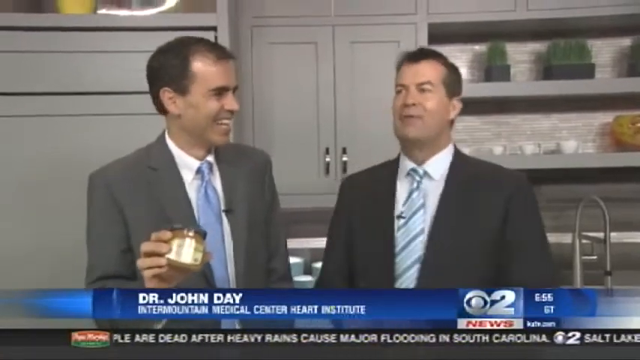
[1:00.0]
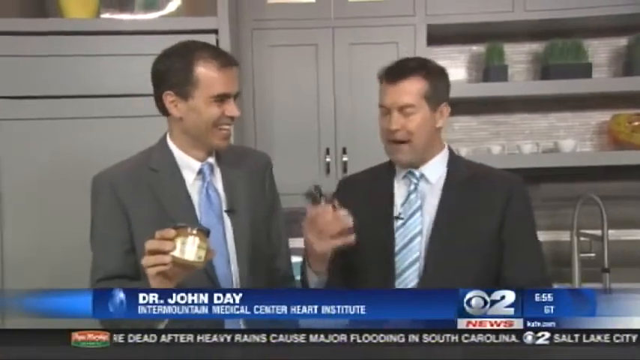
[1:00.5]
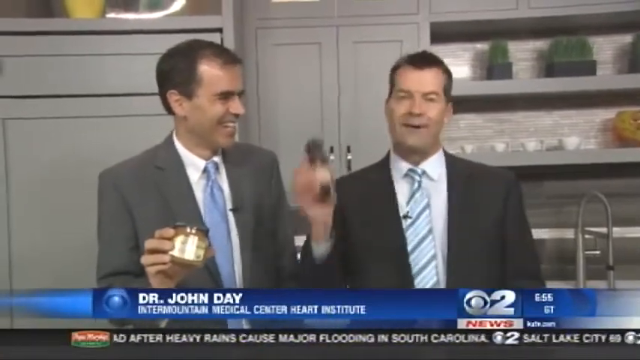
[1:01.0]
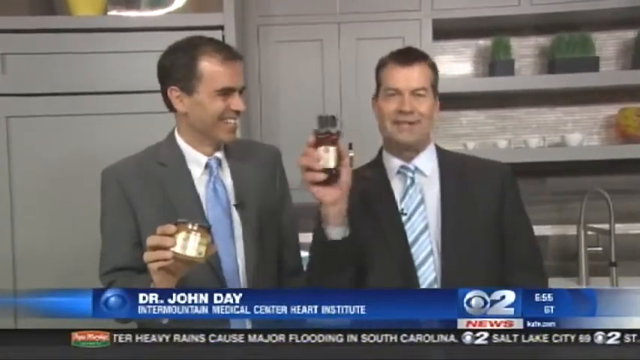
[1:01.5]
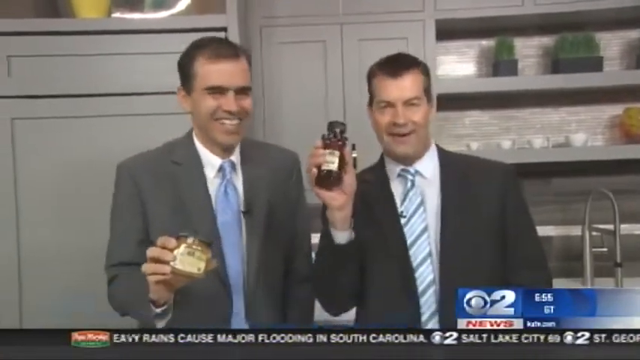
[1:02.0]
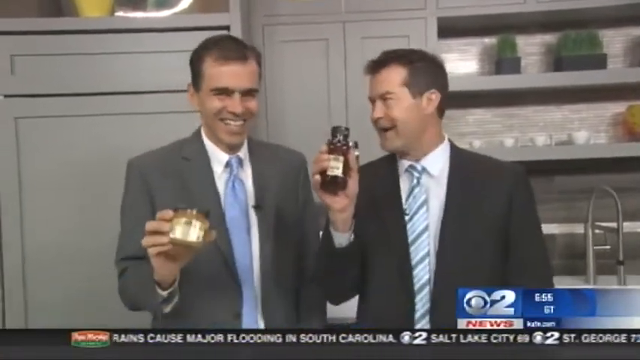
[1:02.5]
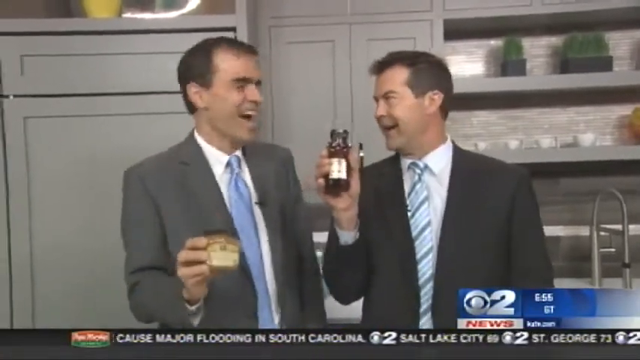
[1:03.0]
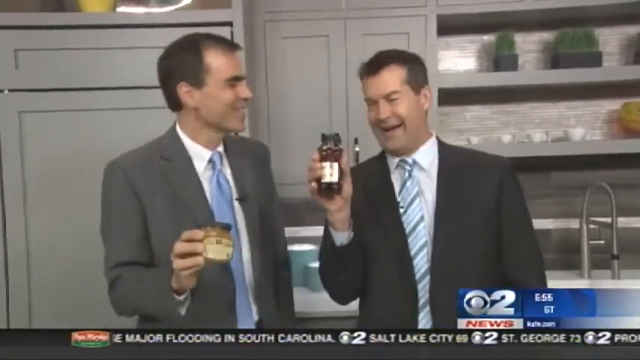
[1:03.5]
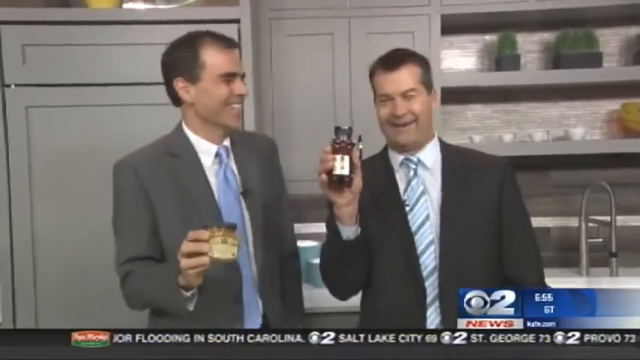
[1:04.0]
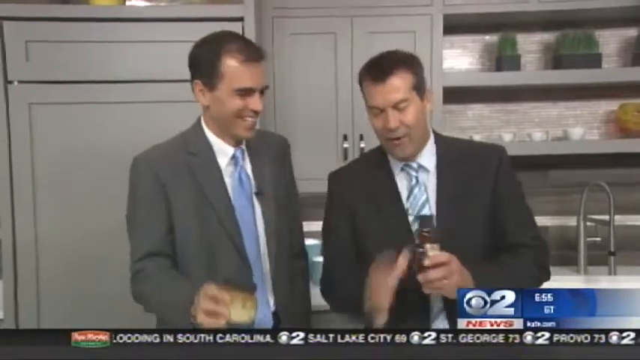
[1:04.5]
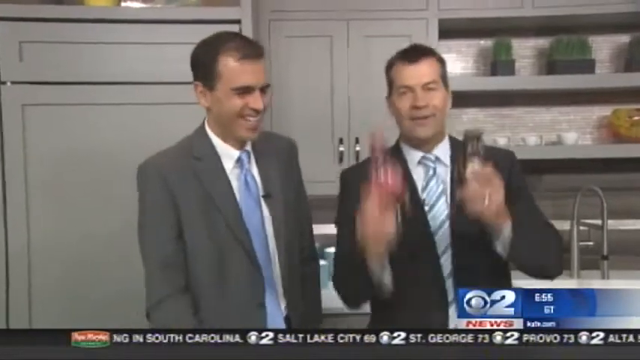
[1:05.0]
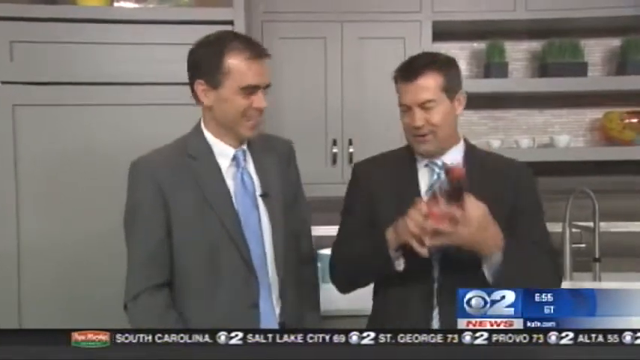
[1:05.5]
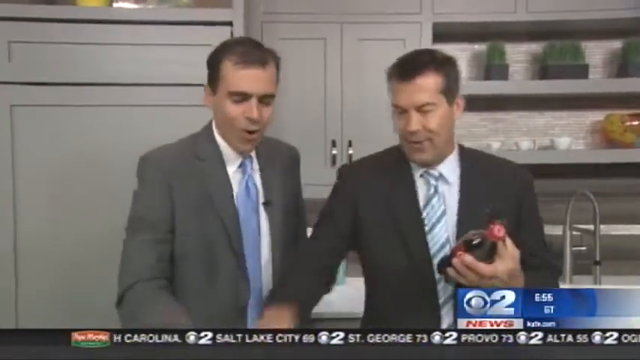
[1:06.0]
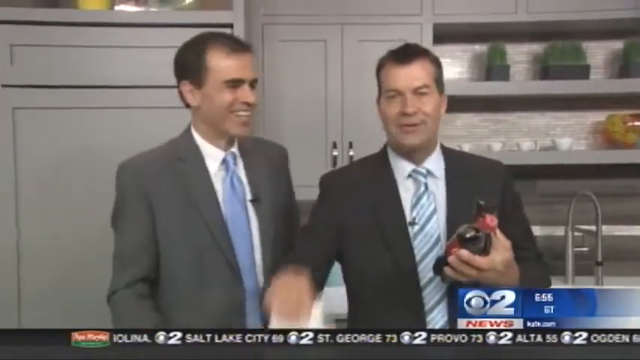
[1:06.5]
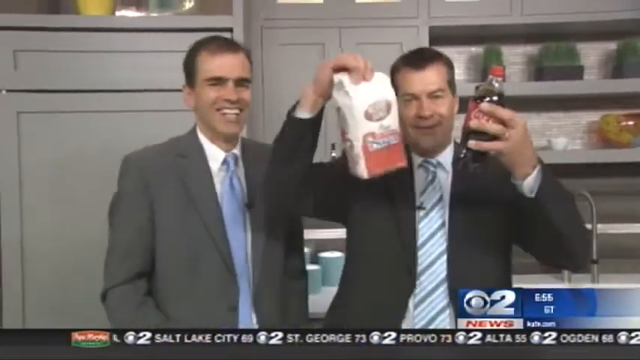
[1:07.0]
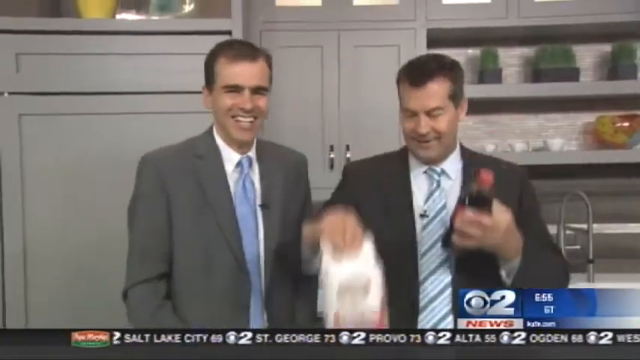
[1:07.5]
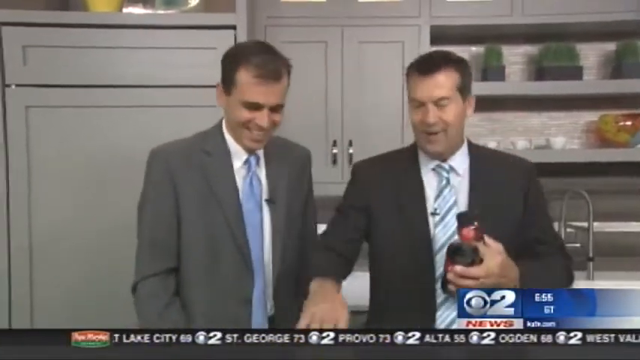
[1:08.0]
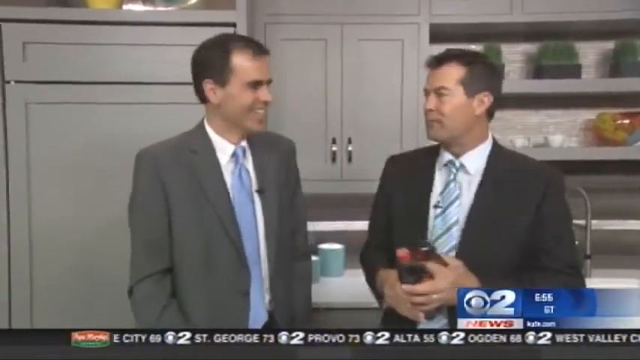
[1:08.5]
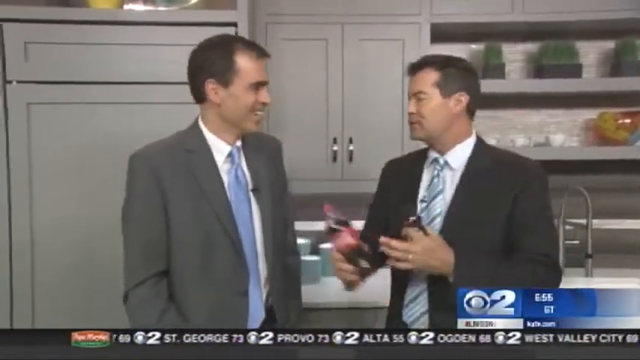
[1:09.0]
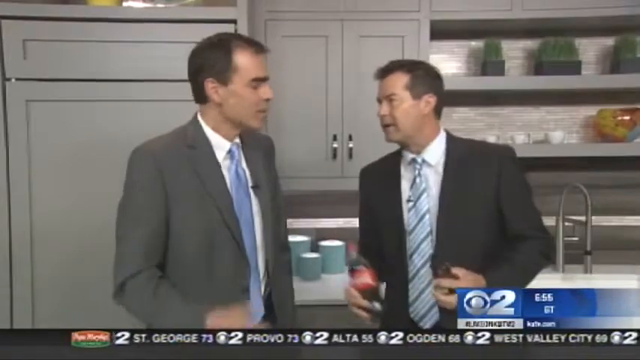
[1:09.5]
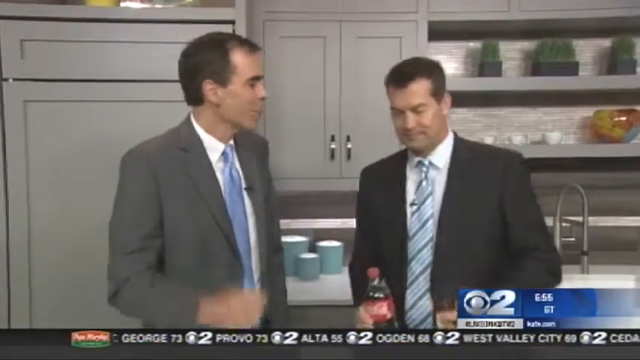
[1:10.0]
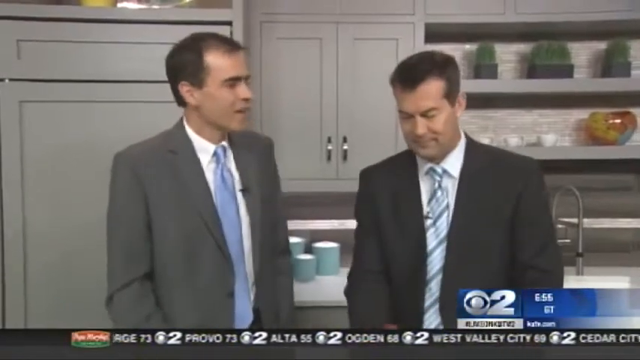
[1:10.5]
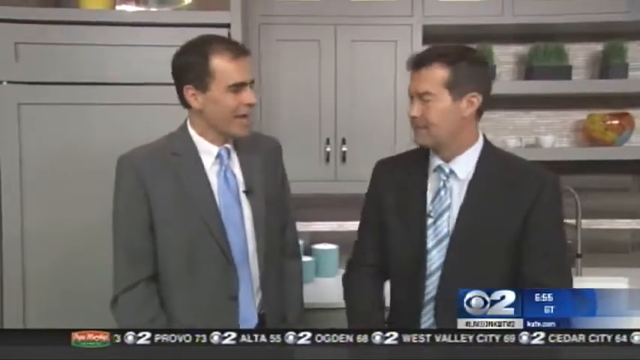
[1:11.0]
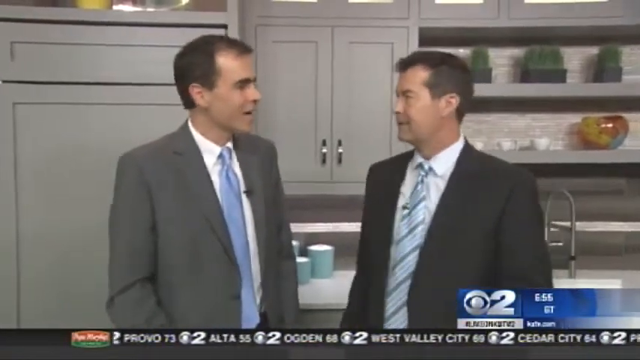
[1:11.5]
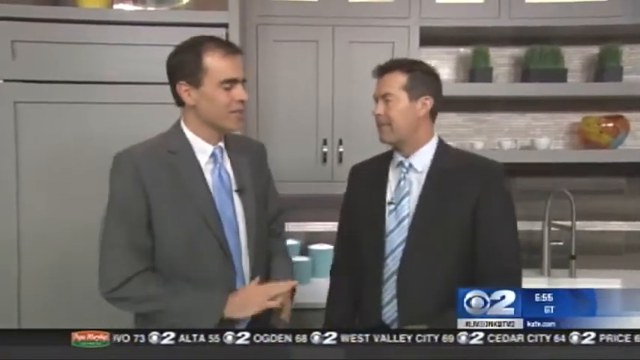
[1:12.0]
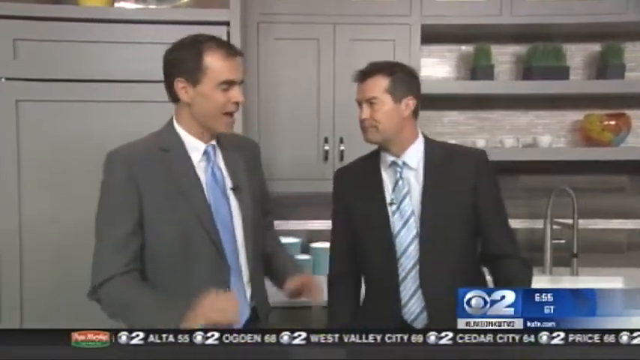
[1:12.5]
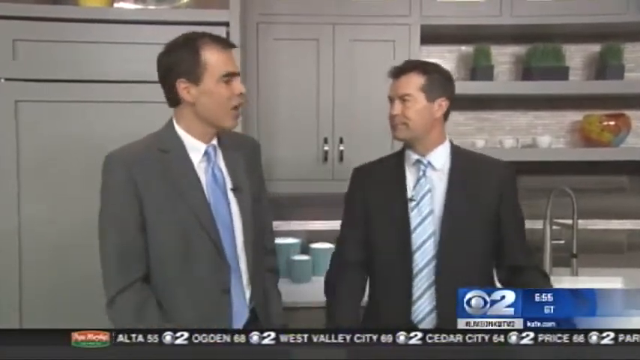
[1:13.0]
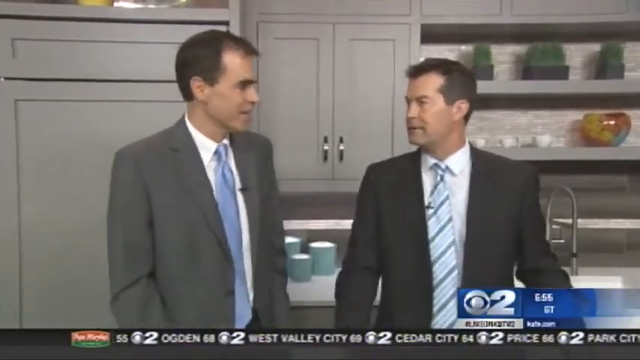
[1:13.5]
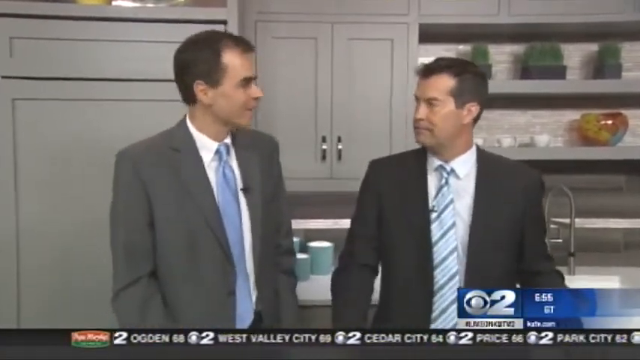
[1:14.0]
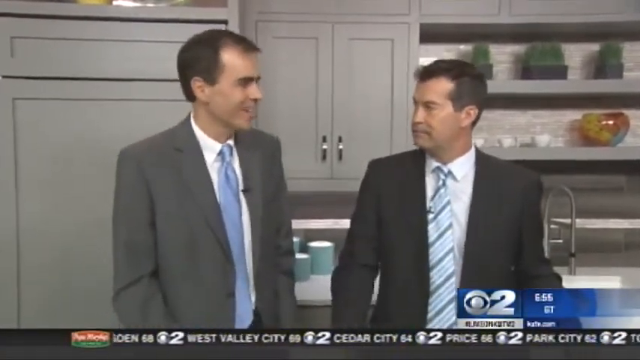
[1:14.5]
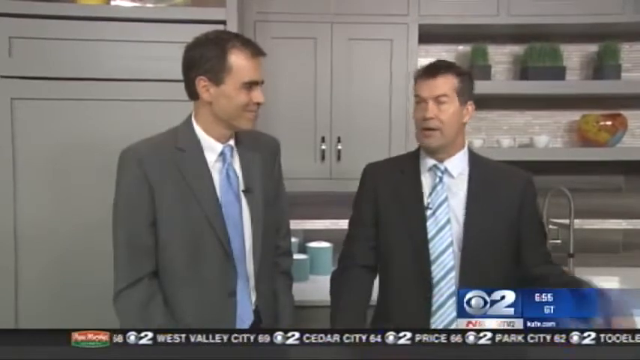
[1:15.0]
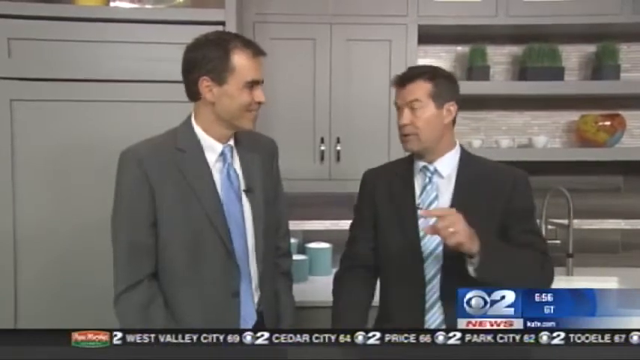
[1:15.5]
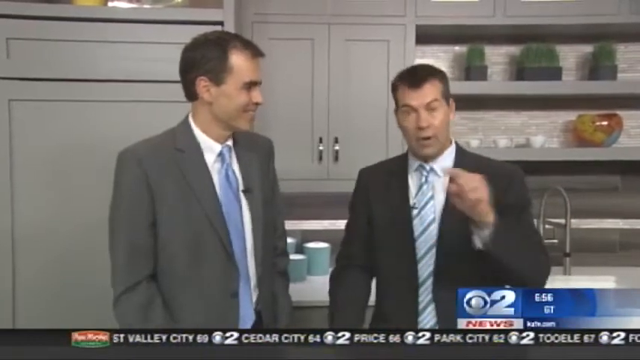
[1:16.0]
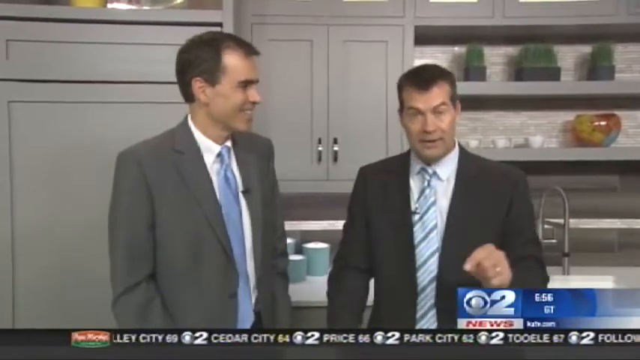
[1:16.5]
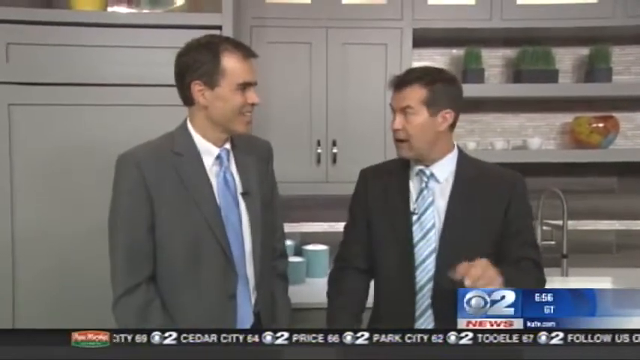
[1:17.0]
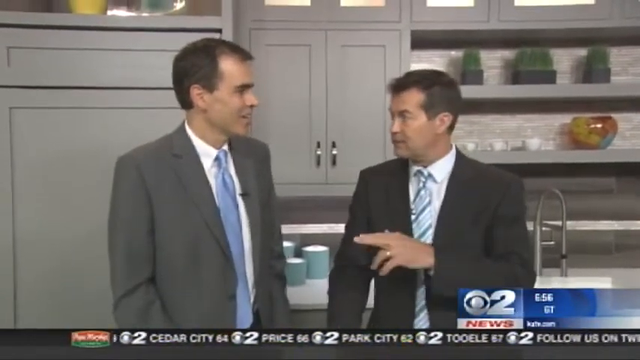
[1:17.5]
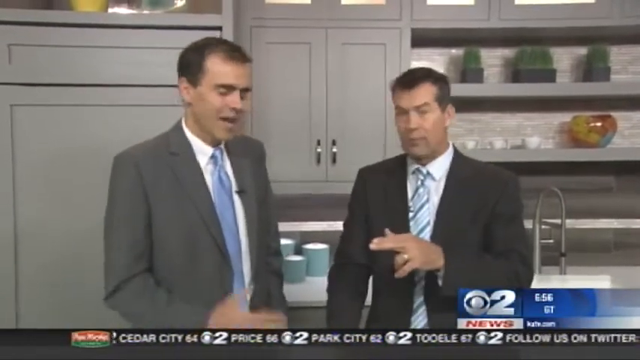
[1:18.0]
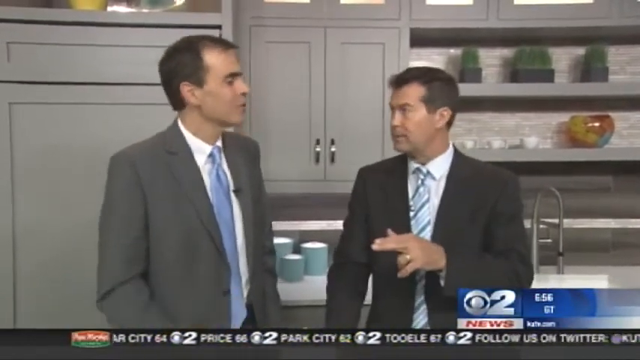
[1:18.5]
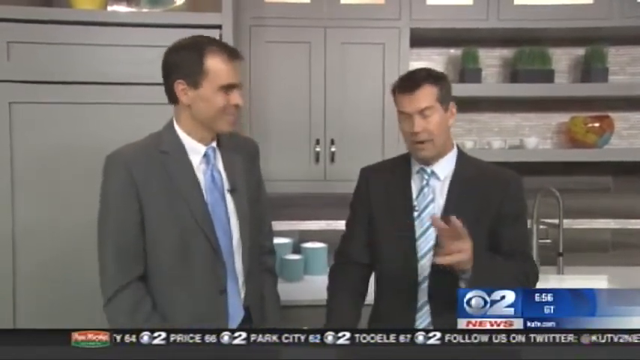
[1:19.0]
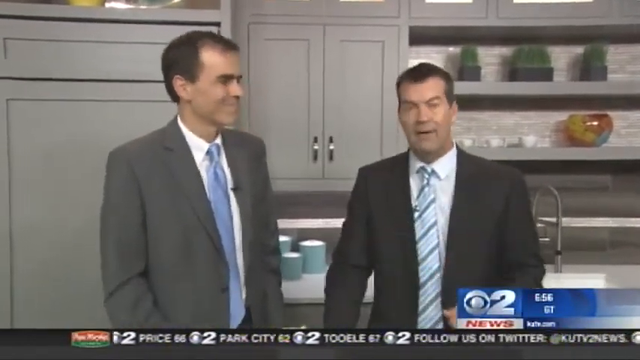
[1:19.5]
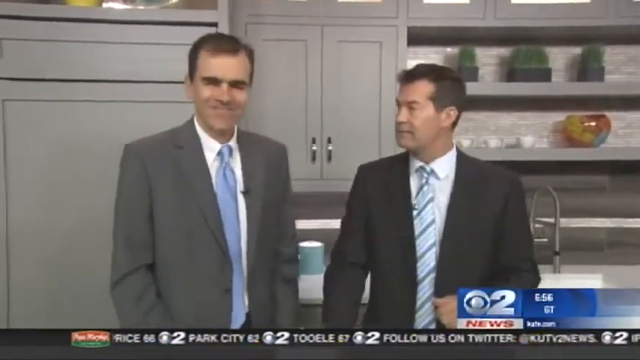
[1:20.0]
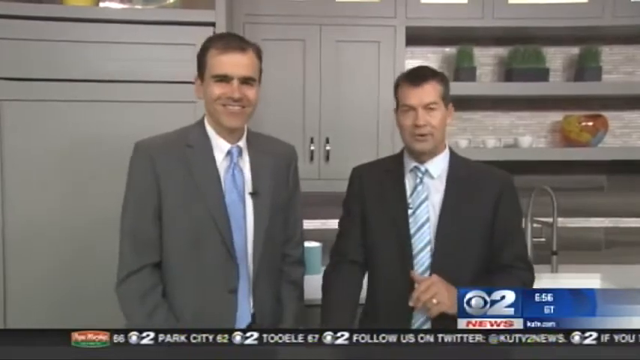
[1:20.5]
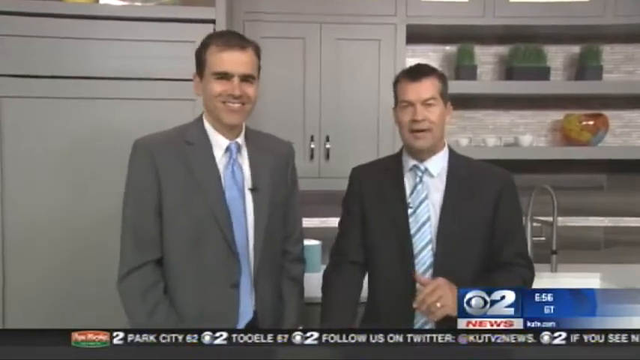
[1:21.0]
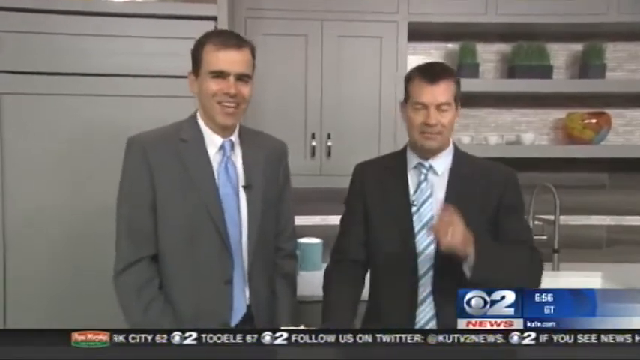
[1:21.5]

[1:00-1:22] Two Caucasian men in their late 40s stand on the kitchen set of a TV show. The man on the left wears a dark gray suit jacket, a light blue tie and a white dress shirt; he smiles and looks over at the man on the right, who wears a black blazer jacket, a white and blue striped tie and a white dress shirt. Both have short cropped brown hair, though the left man's hairline is slightly receding. Each holds a jar of honey in his right hand up to the camera: the left man a small circular jar of raw honey, the right man a bear-shaped plastic bottle of dark brown honey. The right man lifts the bottle to give the camera a better shot, smiling, saying some words and looking over at his companion on the left. A blue rectangular label pops up identifying the left man as Dr. John Day. Both men smile and laugh, and the left man says a few more words, smiling big while looking down at his product. The two men put their jars of honey down, and the right man picks up the bottle of Coca-Cola and the bag of sugar and holds both up to the camera, making a point, before putting down the bag of sugar and turning to face the left man, who continues to talk until the segment ends.